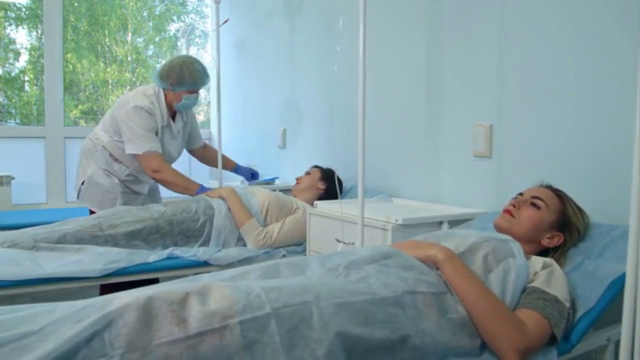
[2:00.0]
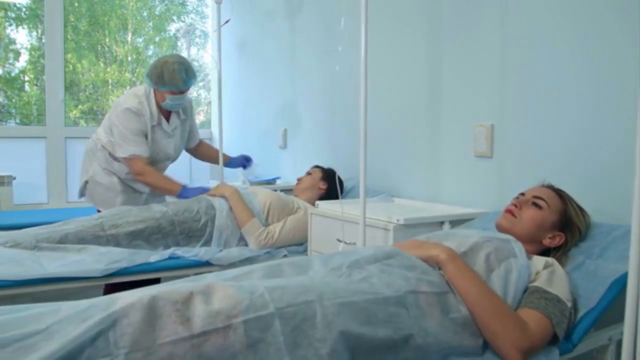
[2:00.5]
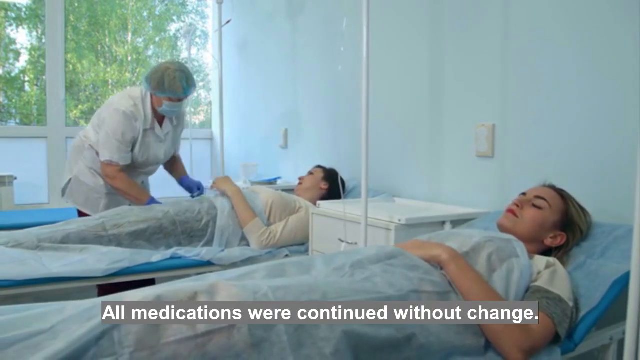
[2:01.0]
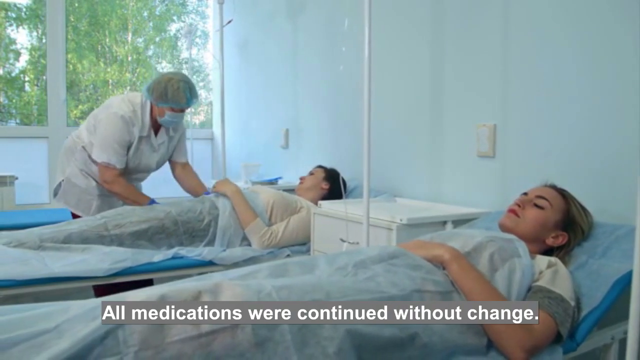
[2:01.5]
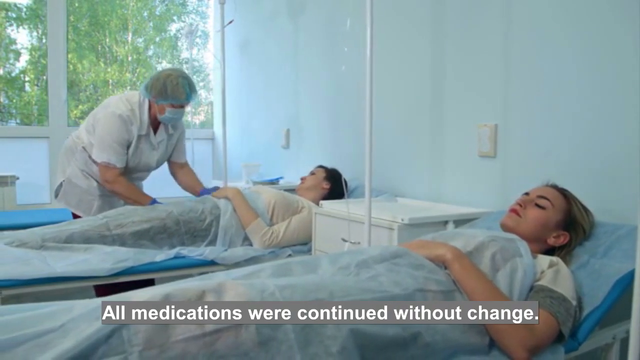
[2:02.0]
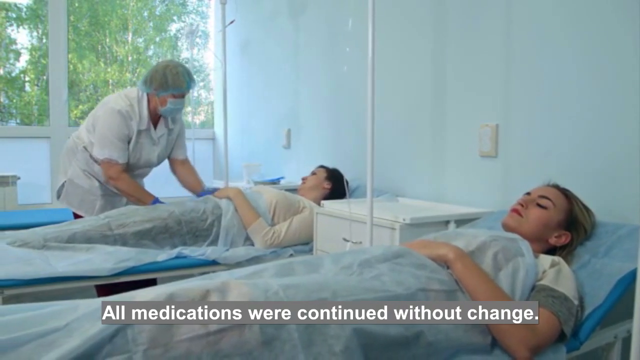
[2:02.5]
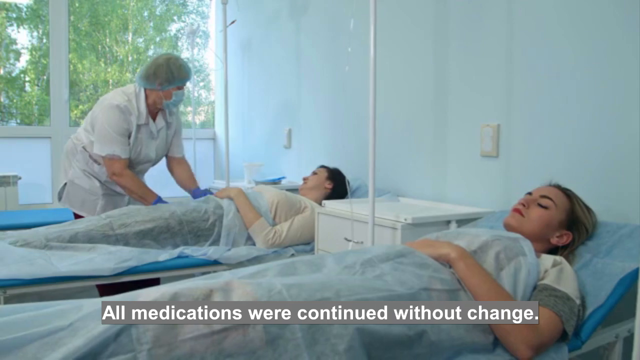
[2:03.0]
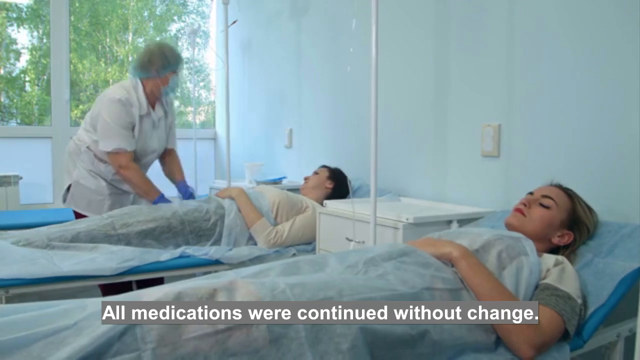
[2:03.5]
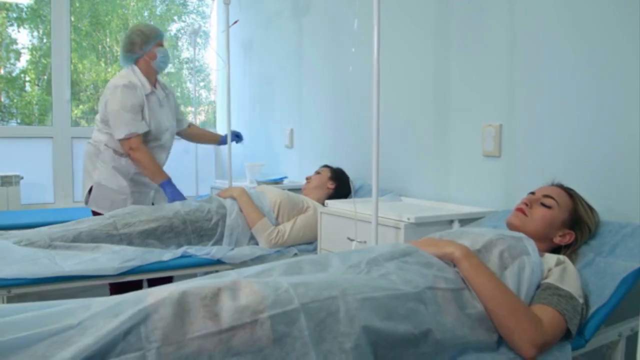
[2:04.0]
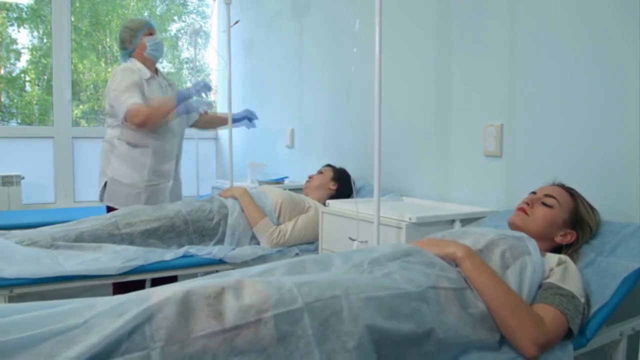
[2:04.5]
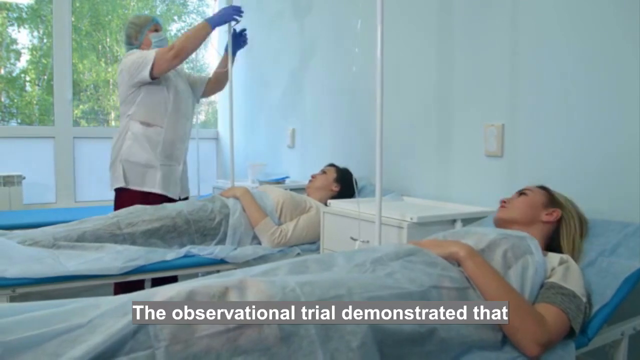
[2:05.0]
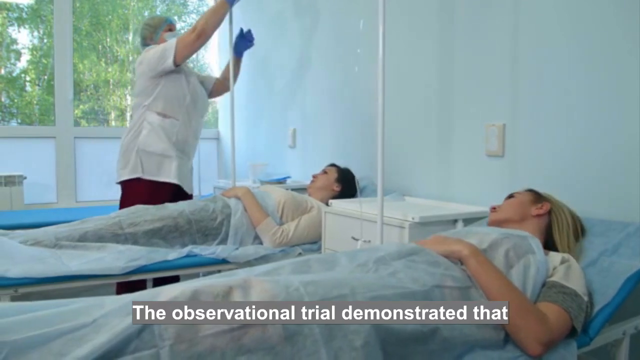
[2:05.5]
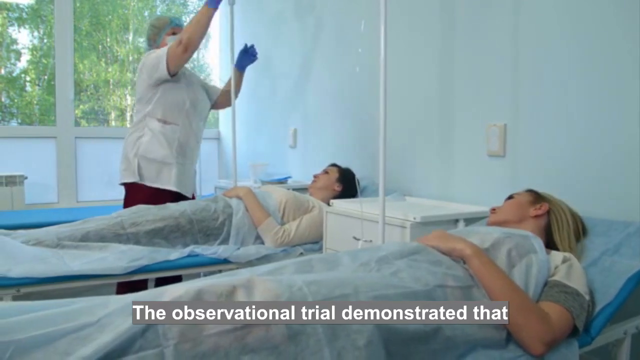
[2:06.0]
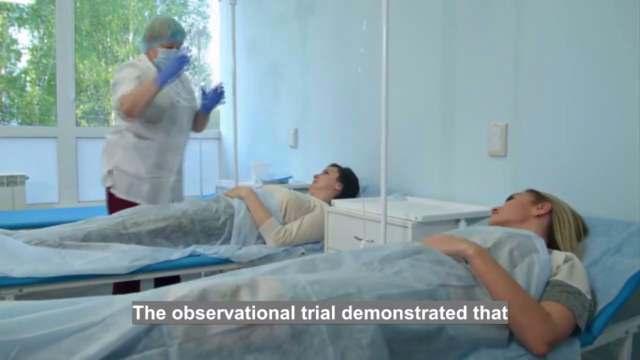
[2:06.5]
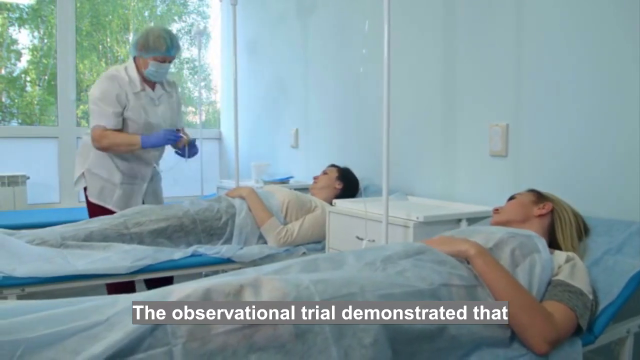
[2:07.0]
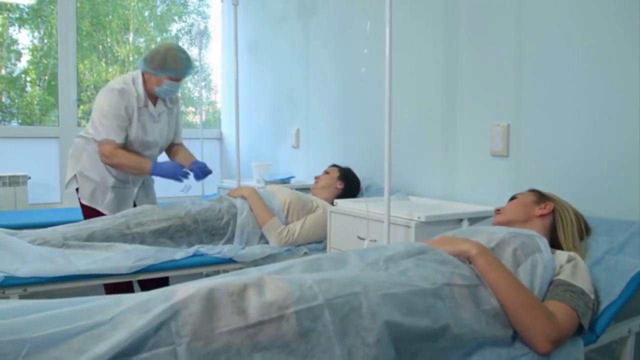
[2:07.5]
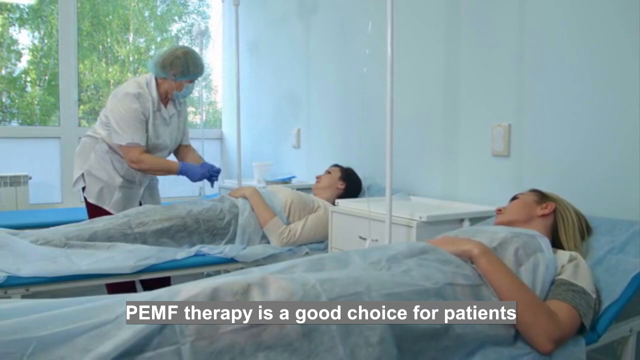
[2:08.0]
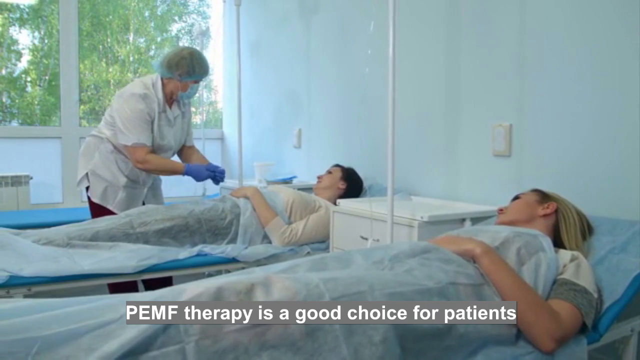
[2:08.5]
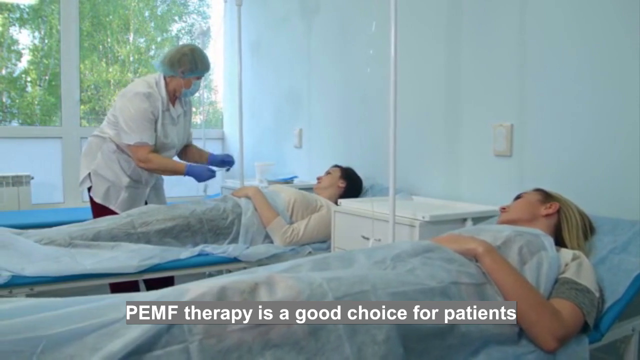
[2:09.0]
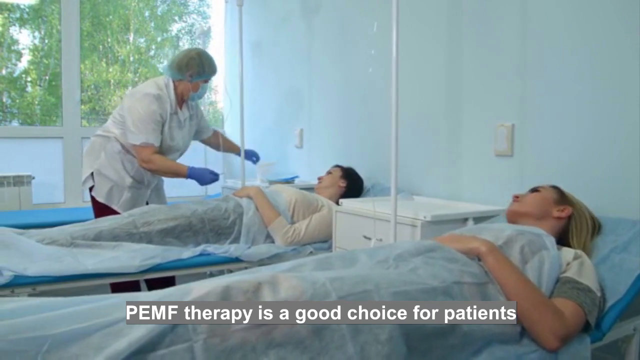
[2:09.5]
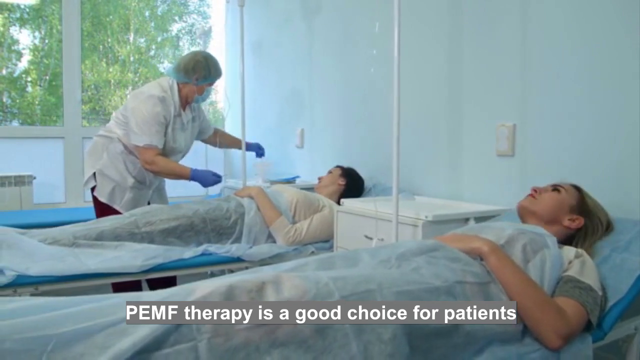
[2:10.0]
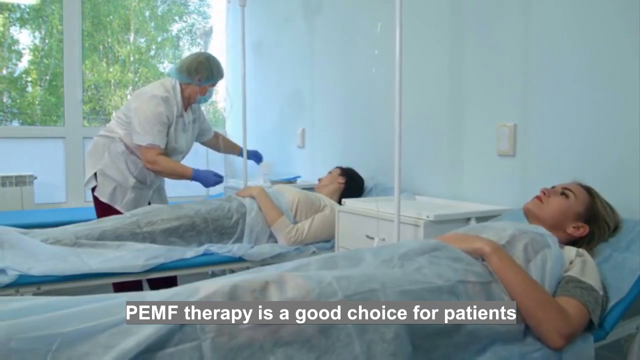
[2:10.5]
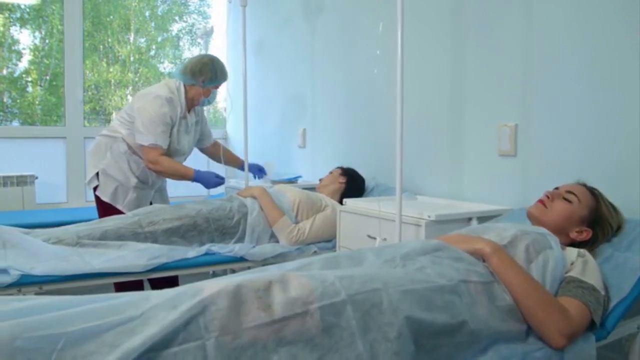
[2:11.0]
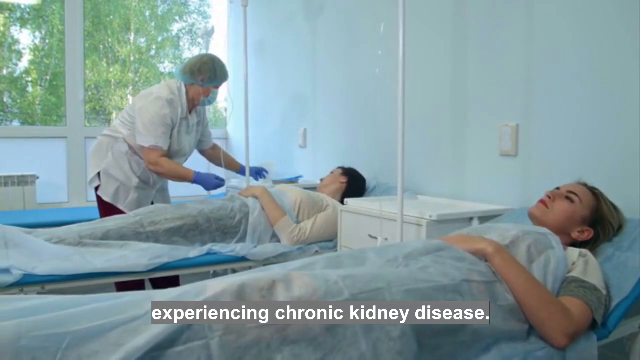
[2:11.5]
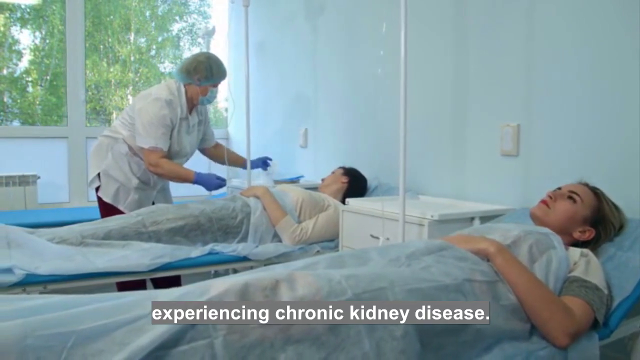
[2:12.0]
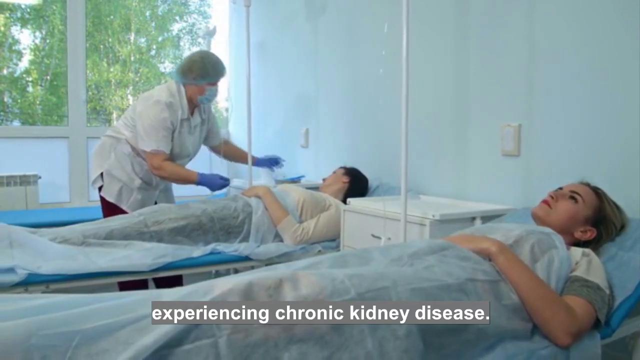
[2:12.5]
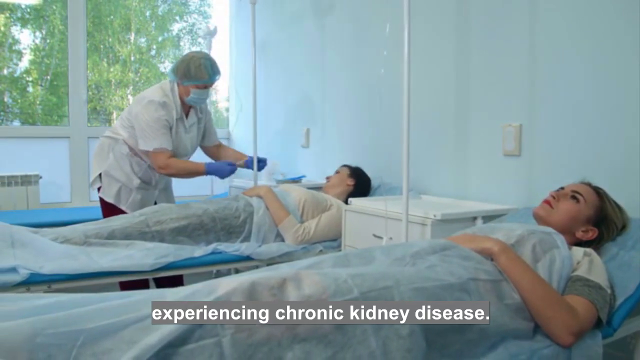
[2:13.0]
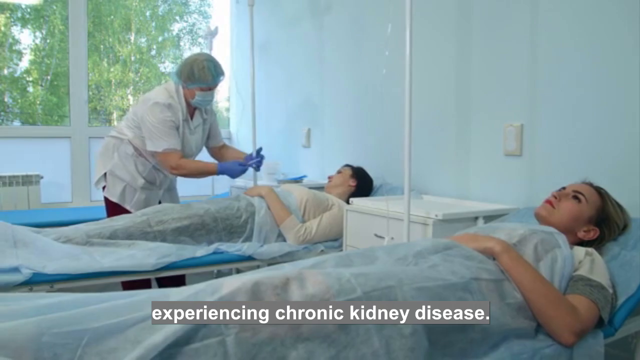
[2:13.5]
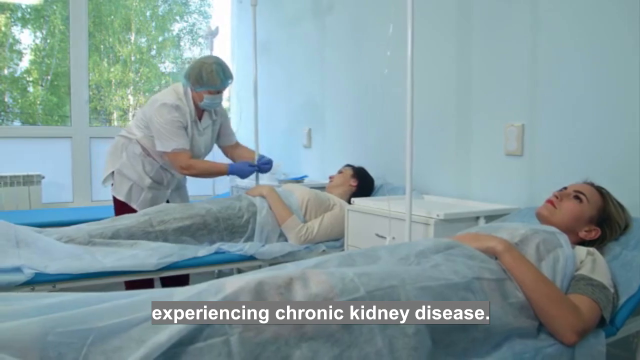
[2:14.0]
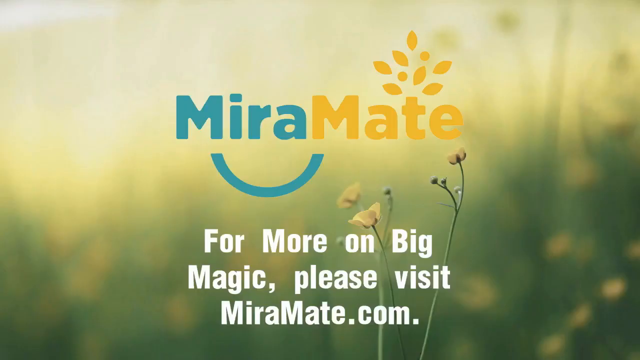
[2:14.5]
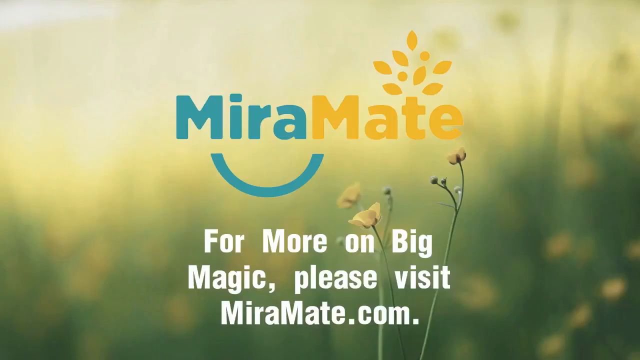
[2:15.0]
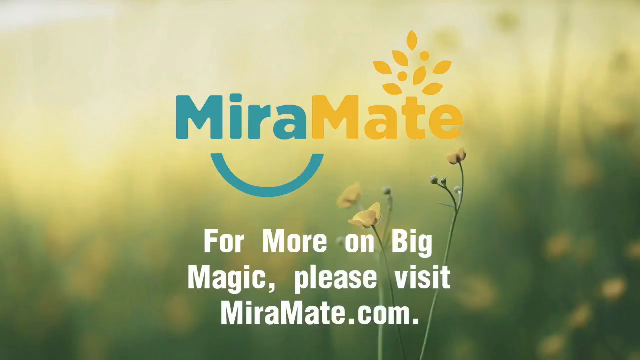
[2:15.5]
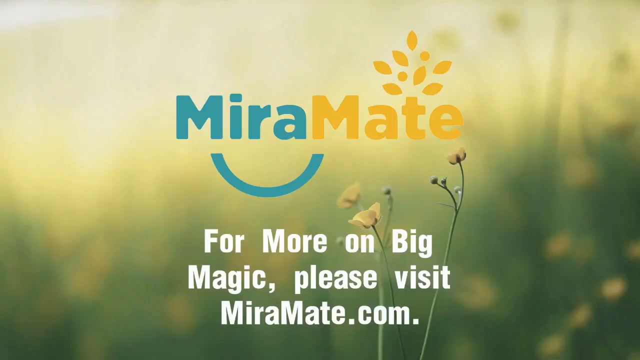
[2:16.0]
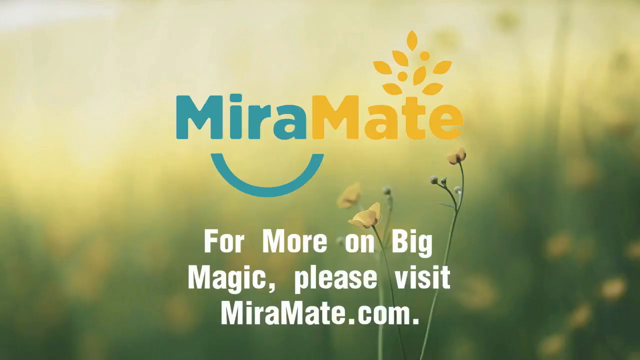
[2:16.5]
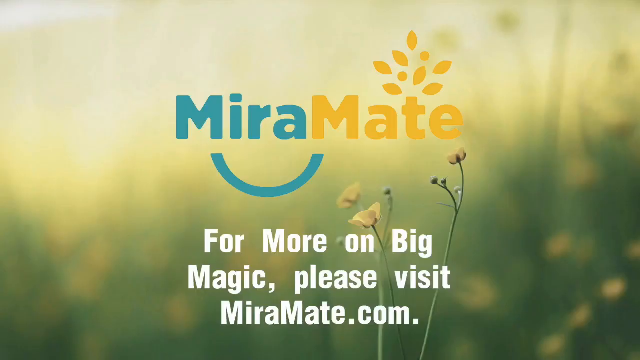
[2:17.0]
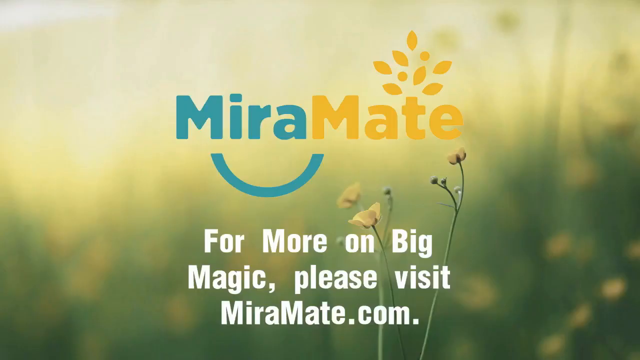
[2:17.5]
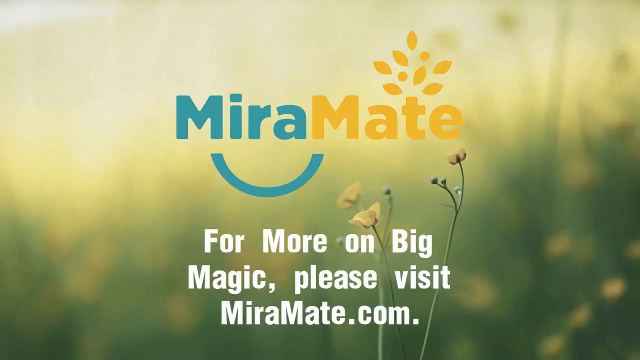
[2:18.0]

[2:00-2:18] The shot holds on the room where the people are being hooked up. A woman in the background makes adjustments to the woman farther from the camera, who is lying in a hospital bed. Text at the bottom reads "all medications were continued without change." The woman in the background keeps moving, reaching up and grabbing an IV, while the woman closest to the camera turns her head to look over at what is going on. Text reads "observational trial demonstrated that PEMF therapy is a good choice for patients experiencing chronic kidney disease." A washed-out green background appears with "my roommate" at the top in blue and yellow, and text reading "for more on Big Magic, please visit miramate.com".